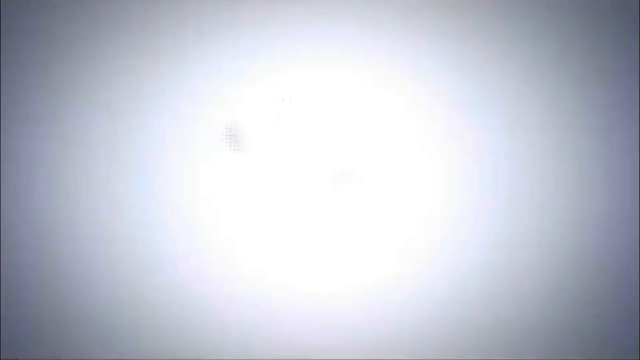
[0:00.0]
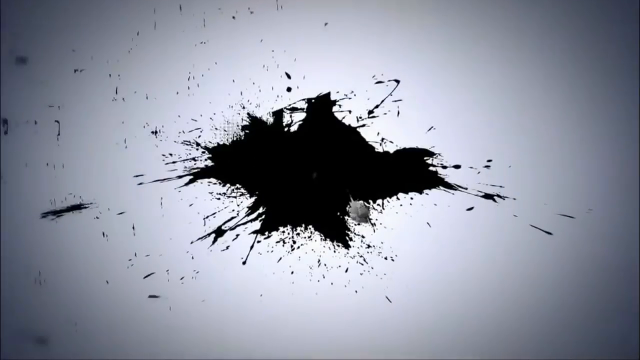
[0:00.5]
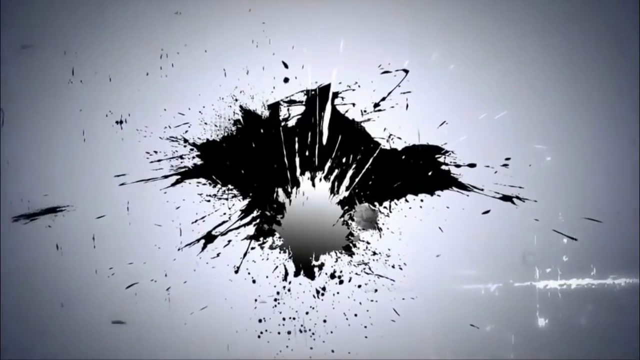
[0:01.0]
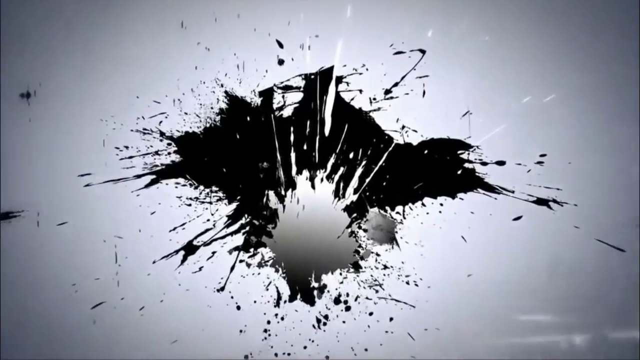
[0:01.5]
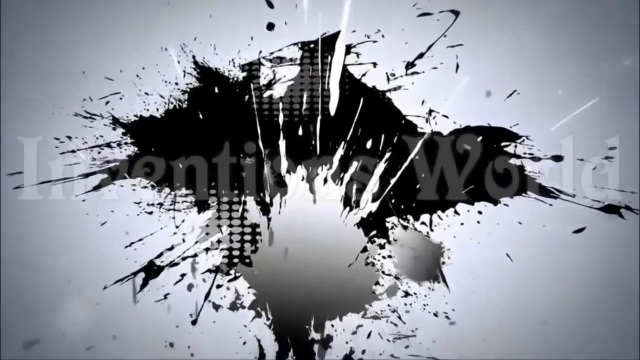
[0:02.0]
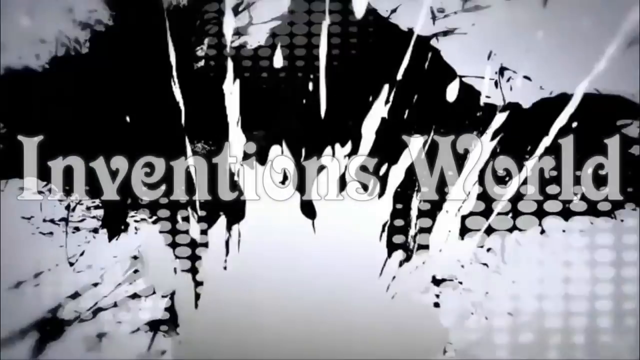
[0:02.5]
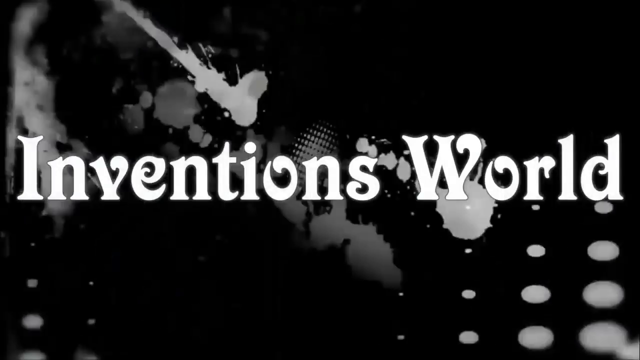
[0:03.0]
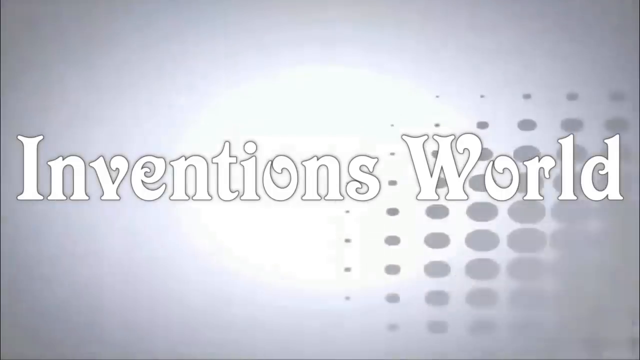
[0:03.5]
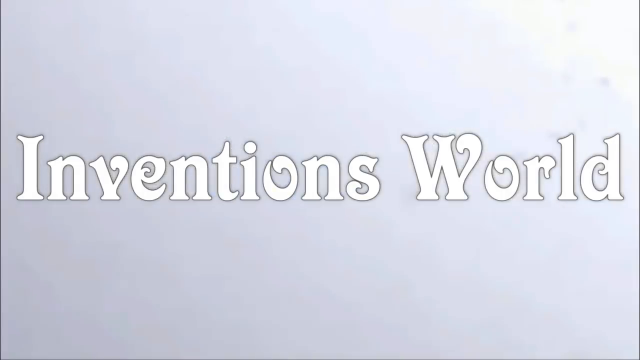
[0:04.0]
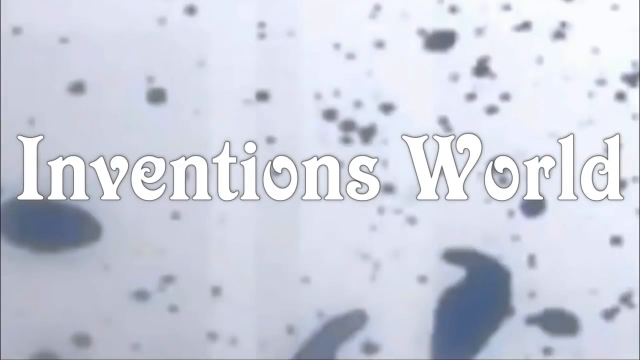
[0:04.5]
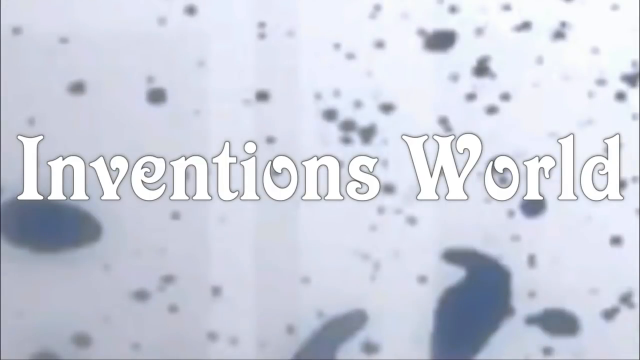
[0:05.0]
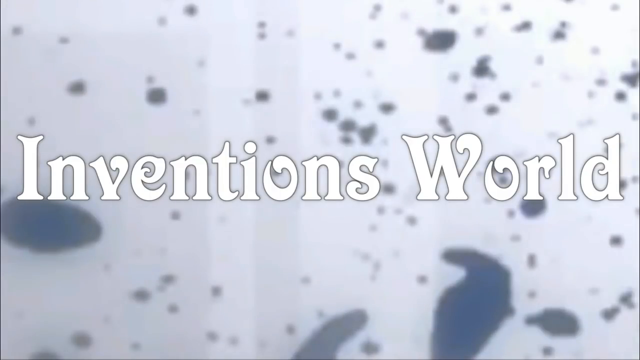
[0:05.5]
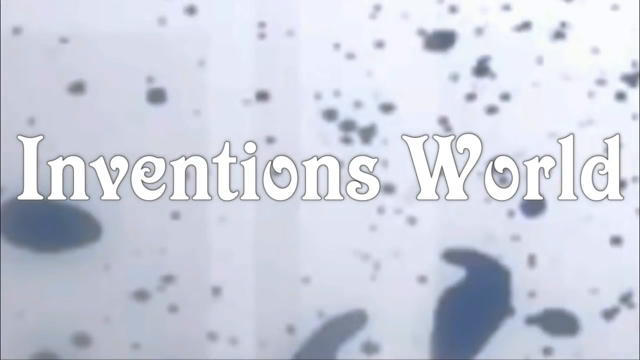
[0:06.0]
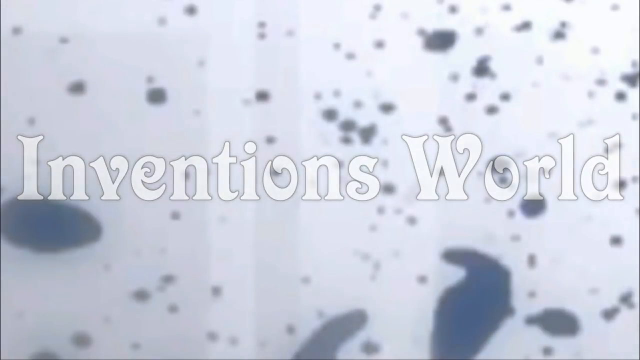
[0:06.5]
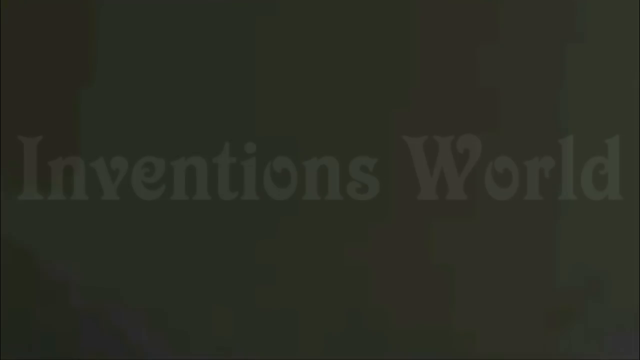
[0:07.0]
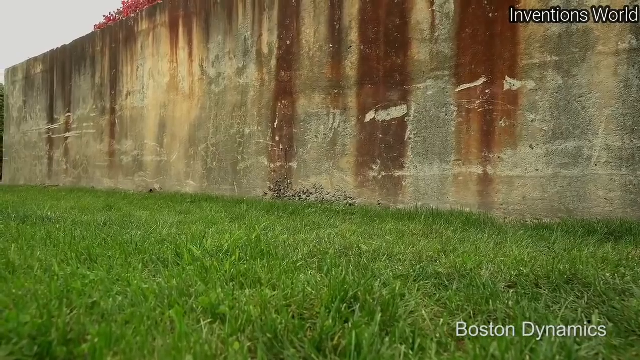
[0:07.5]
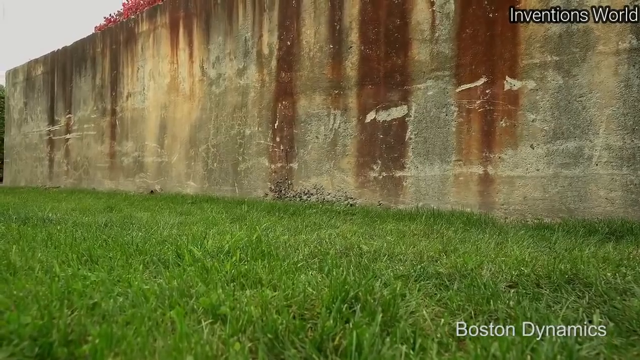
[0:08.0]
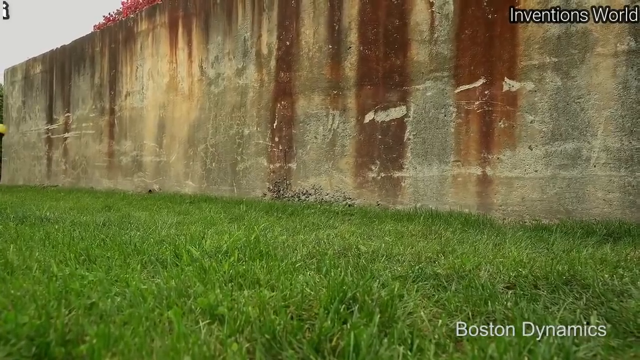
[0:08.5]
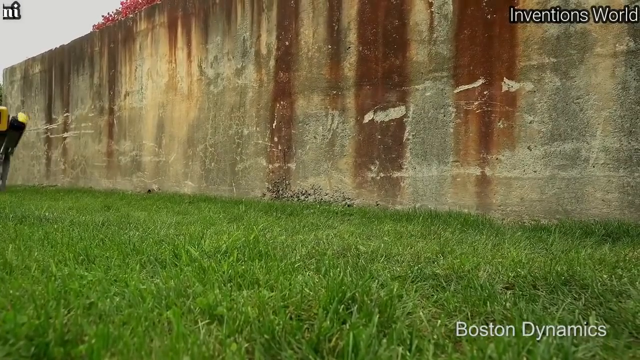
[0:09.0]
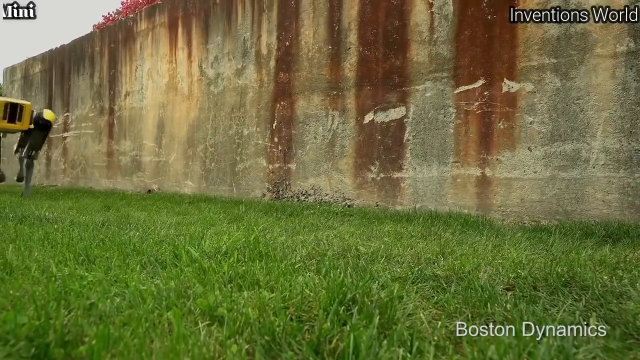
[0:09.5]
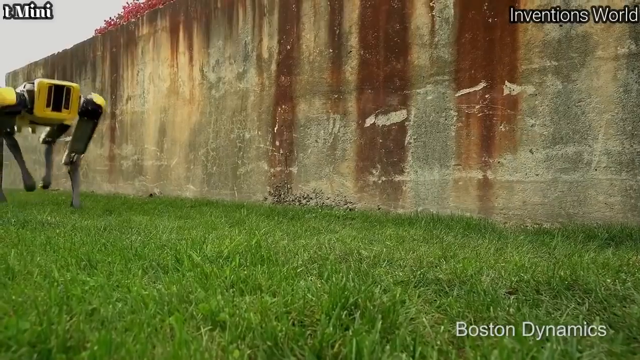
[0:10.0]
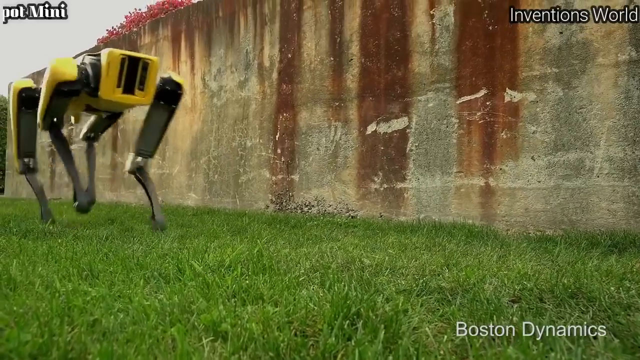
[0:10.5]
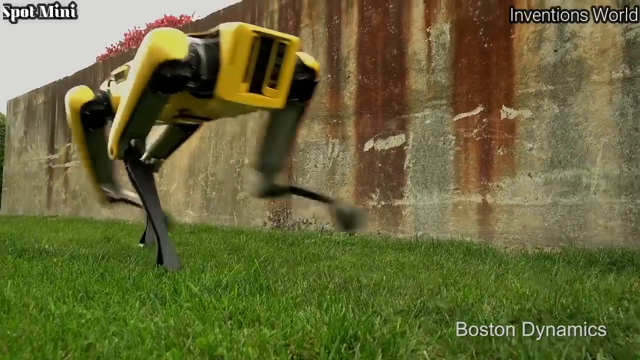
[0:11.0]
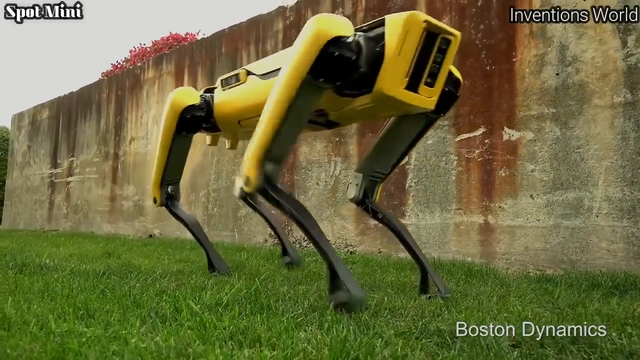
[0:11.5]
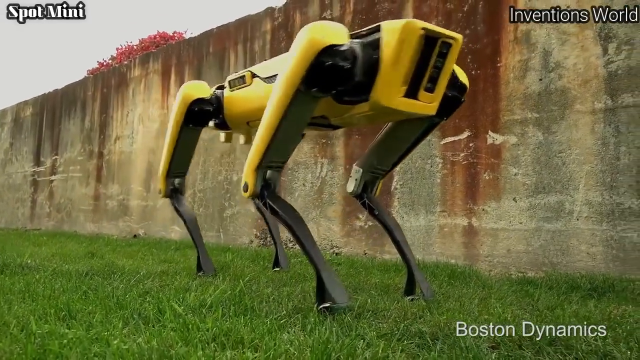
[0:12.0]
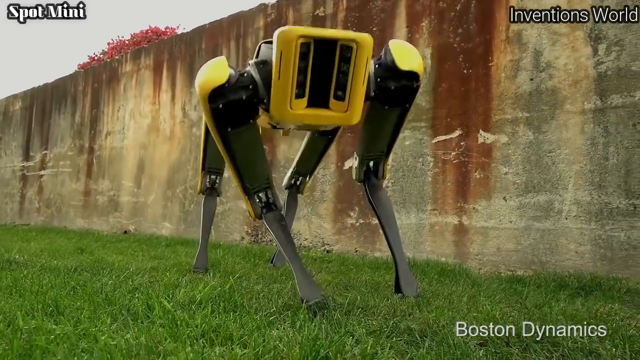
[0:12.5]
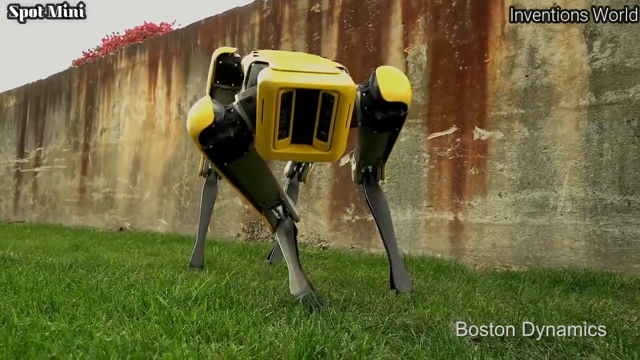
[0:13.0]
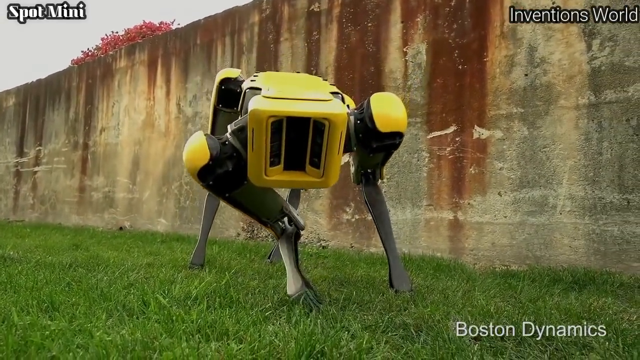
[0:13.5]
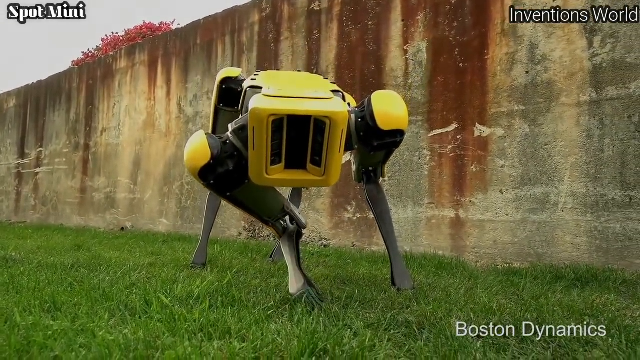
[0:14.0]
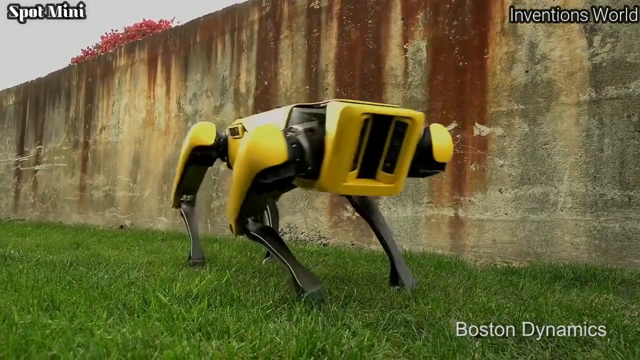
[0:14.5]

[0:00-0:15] The video opens with some black splotches, followed by the text "Inventions World" in white. It then moves to an outdoor view with a giant wall and green grass. A little yellow robot dog walks in on four legs and seems to bend down and look at the camera. The wall in the background has a bunch of red marks that look kind of rusty. The yellow robot doesn't really have a face; instead it has a concave little camera setup at its front. Its legs have joints in the middle and are kind of inward, backward legs, splayed out: the front ones are splayed backward compared to a biological animal, while the back ones are apparently splayed the other way.